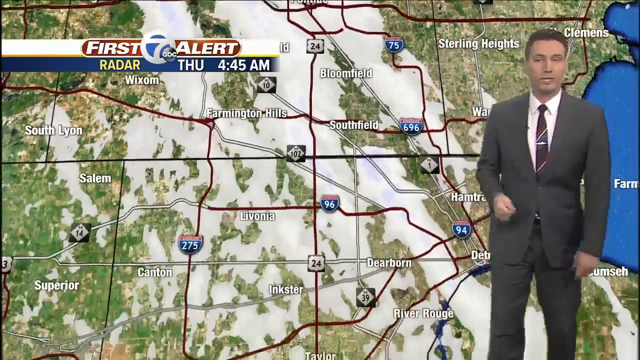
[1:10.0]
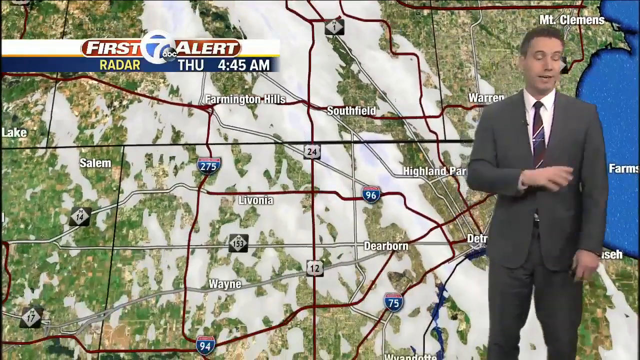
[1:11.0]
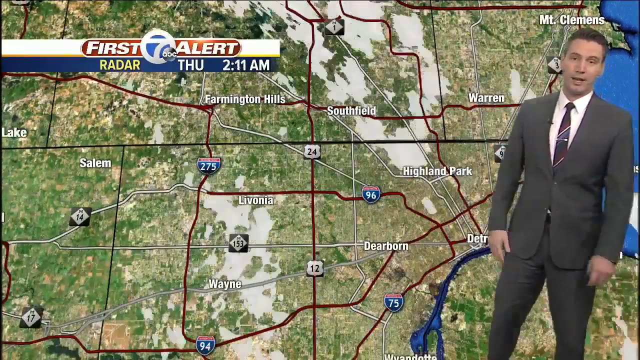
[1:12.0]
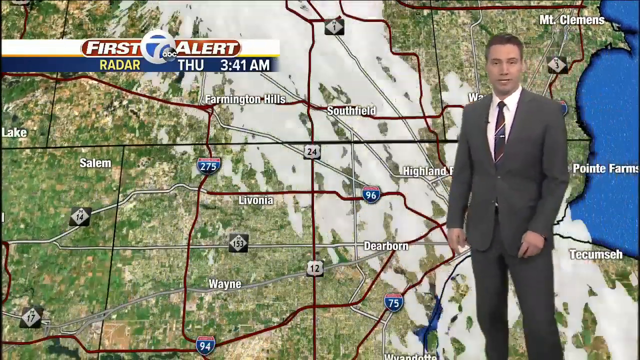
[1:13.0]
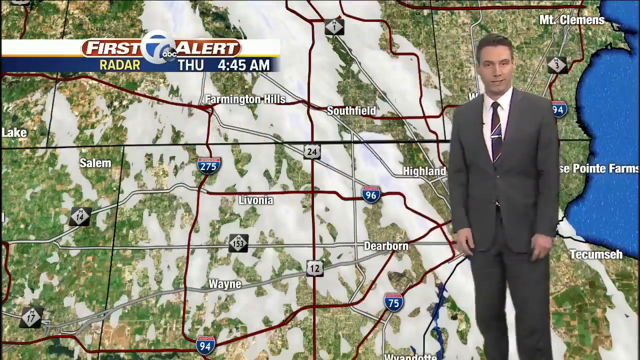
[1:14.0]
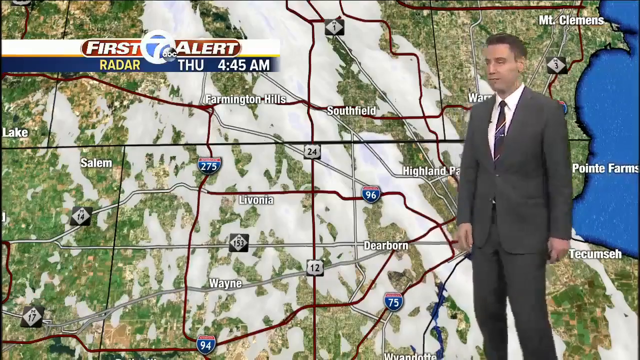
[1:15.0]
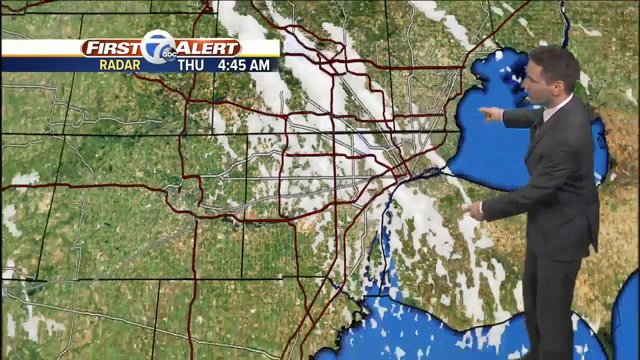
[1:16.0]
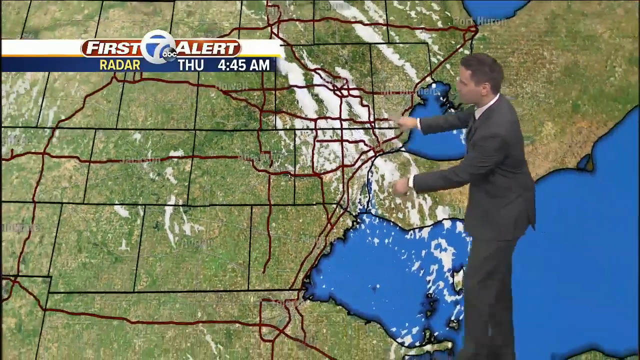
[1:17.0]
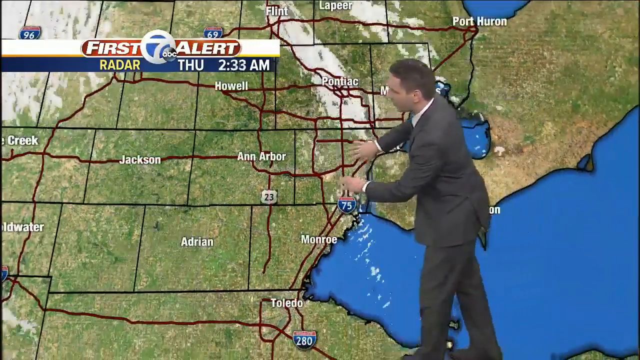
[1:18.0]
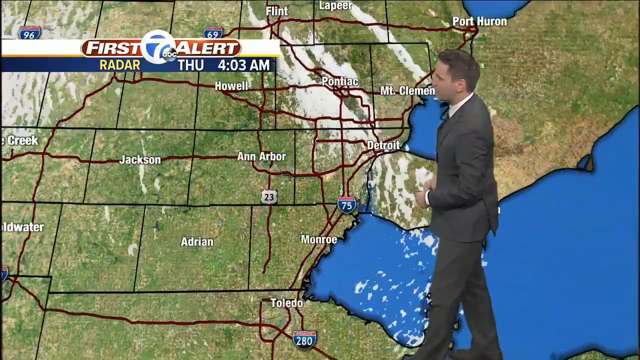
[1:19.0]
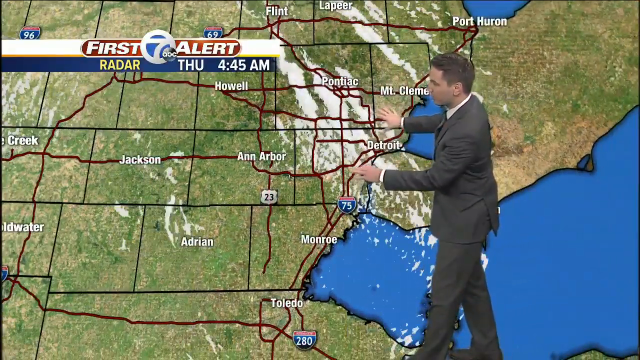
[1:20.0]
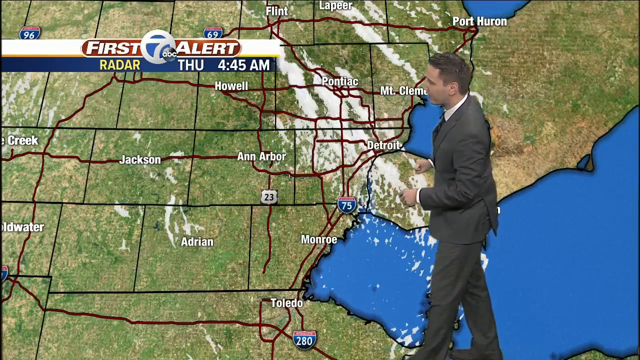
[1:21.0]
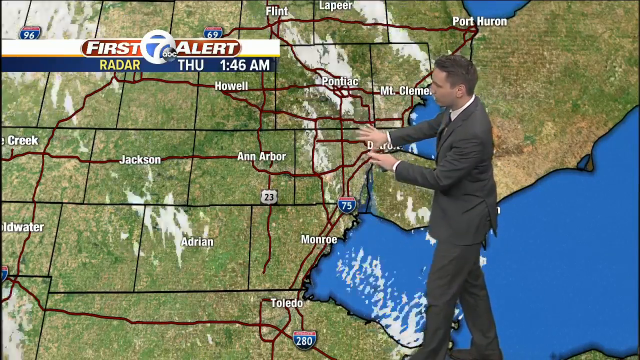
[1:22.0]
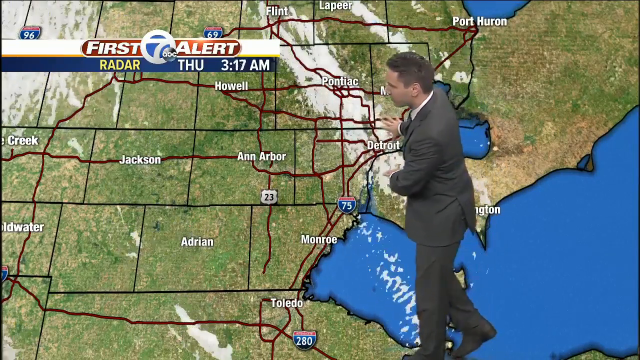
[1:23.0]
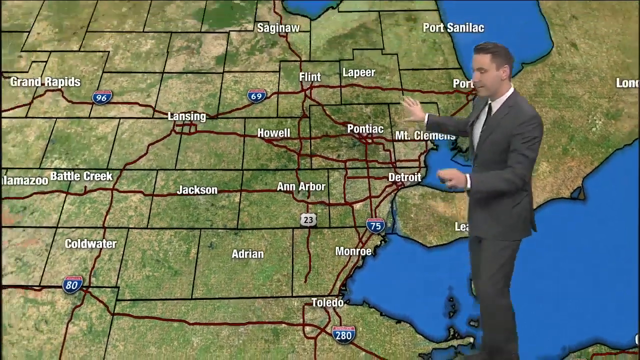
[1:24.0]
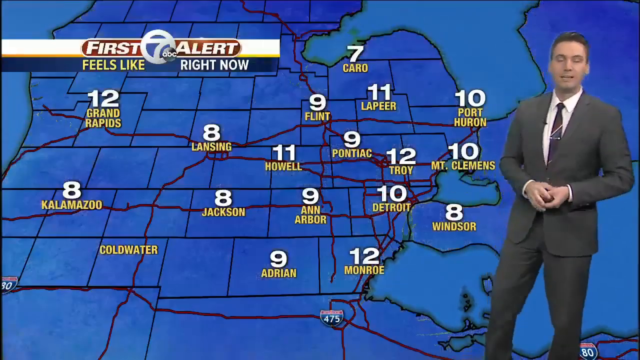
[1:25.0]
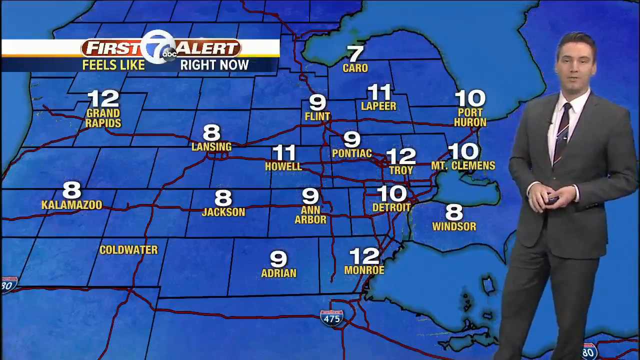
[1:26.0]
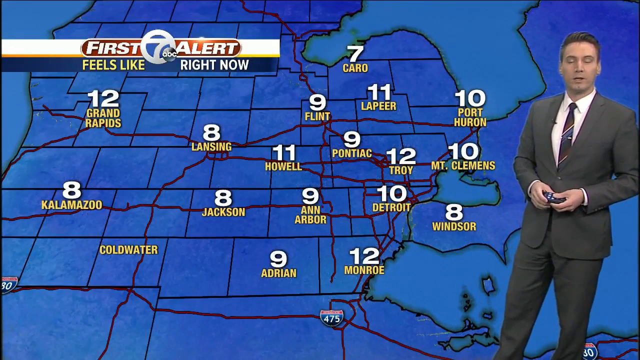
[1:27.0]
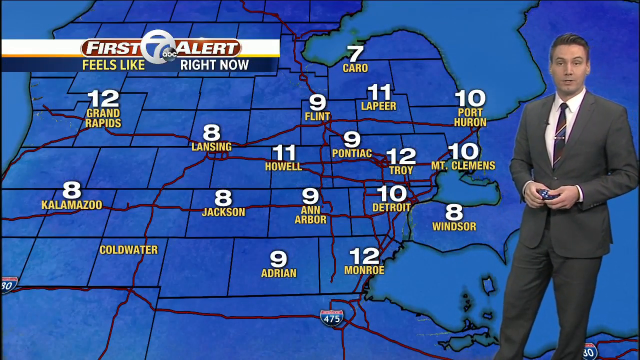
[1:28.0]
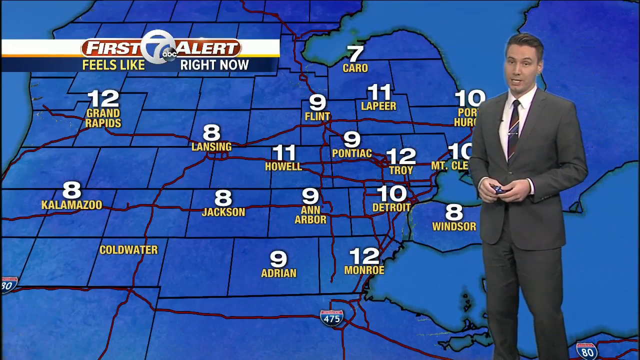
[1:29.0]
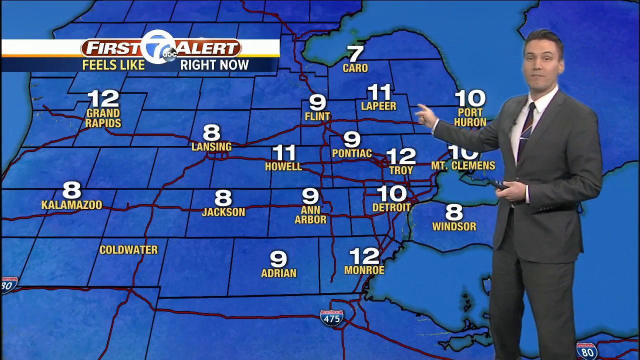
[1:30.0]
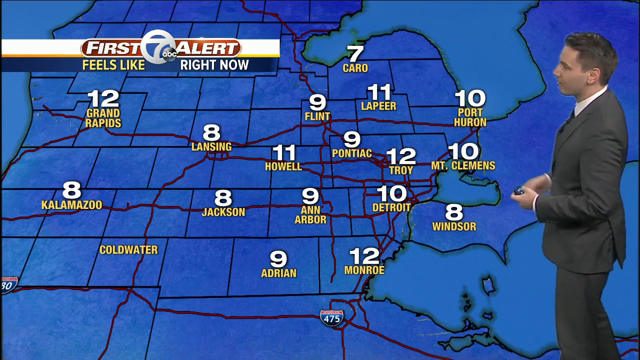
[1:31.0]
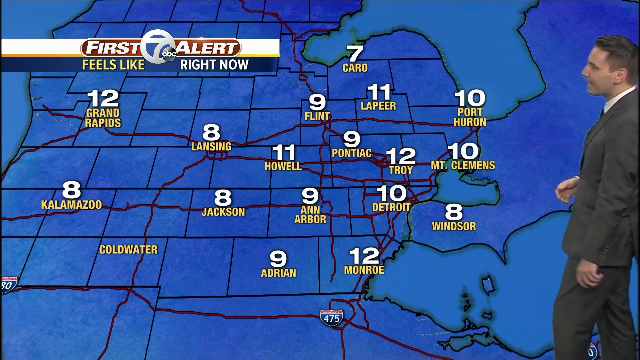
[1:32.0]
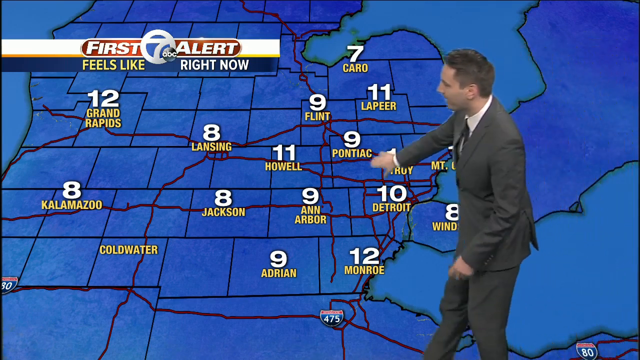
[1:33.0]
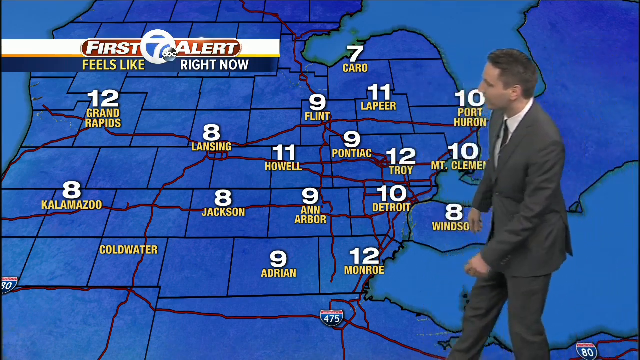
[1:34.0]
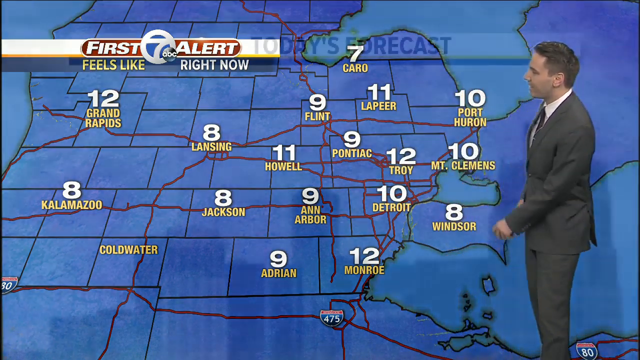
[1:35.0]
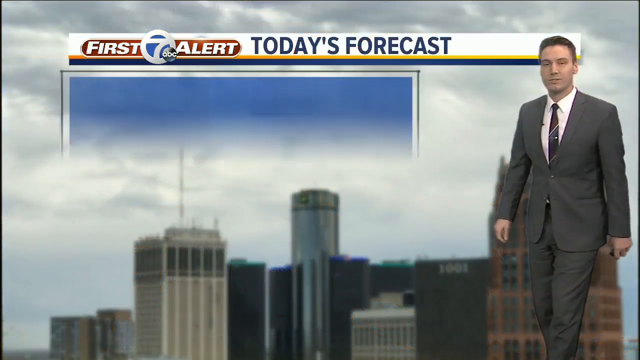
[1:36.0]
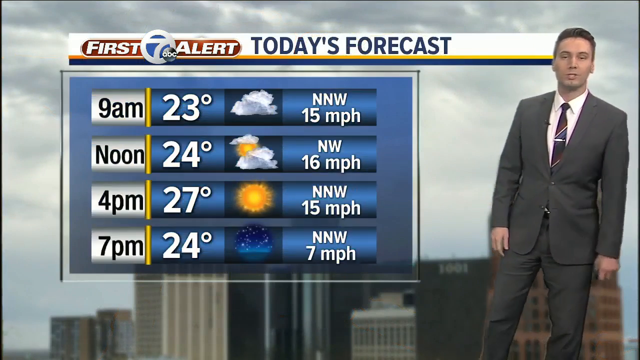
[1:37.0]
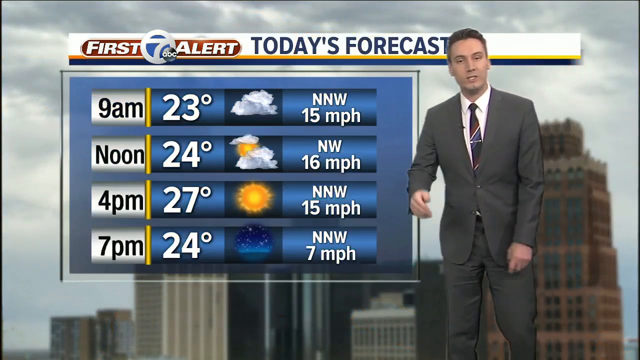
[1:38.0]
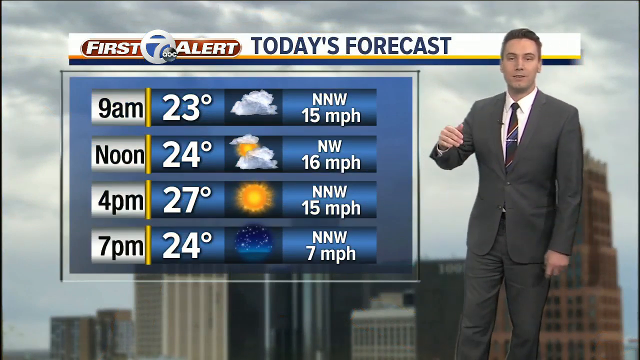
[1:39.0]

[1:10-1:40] Kevin faces the camera while, on the weather map behind him, about three to four rows of very elongated clouds come from the north and travel down the screen. The clouds seem very thick, possibly snow clouds. The land on the map looks extremely dry, perhaps like dead grass. There is no date on the map. A different type of map appears for a moment. Then the screen reads "first alert, today's forecast": 9 a.m., 23 degrees, wind north by northwest at 15 miles per hour; noon, 24 degrees, northwest winds at 16 miles per hour; 4 p.m., 27 degrees, north by northwest winds at 15 miles per hour; and 7 p.m., 24 degrees, north by northwest at seven miles per hour. Kevin looks like he is explaining something.